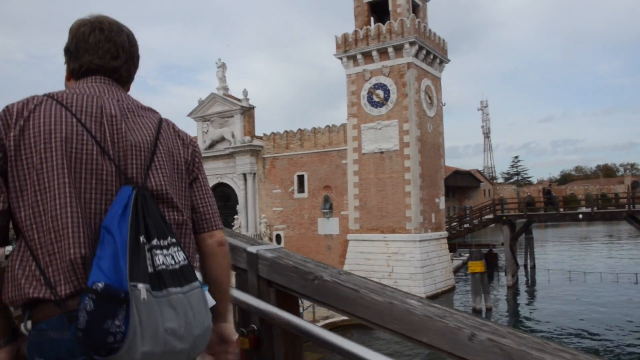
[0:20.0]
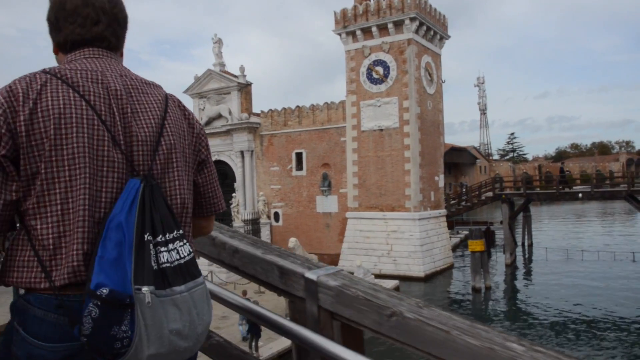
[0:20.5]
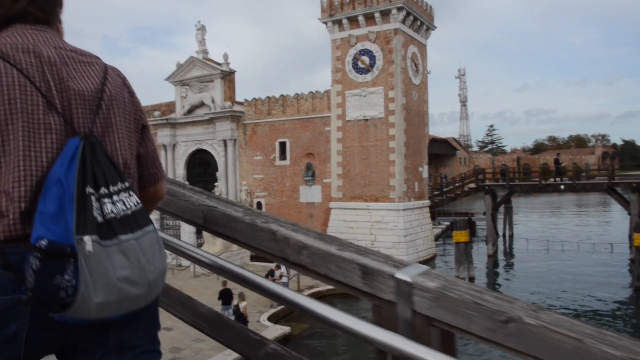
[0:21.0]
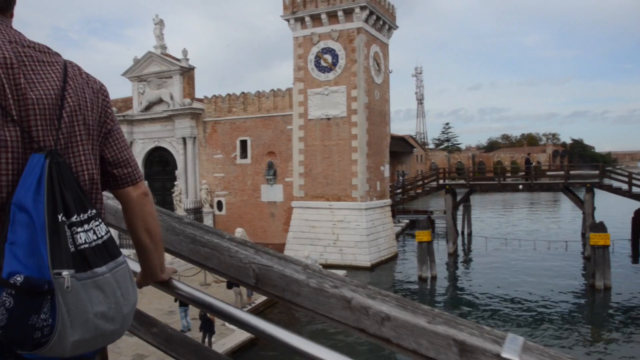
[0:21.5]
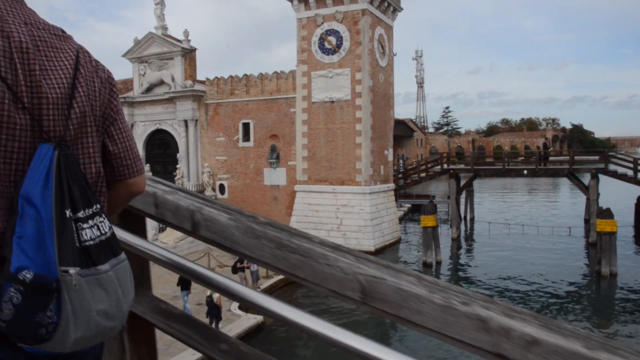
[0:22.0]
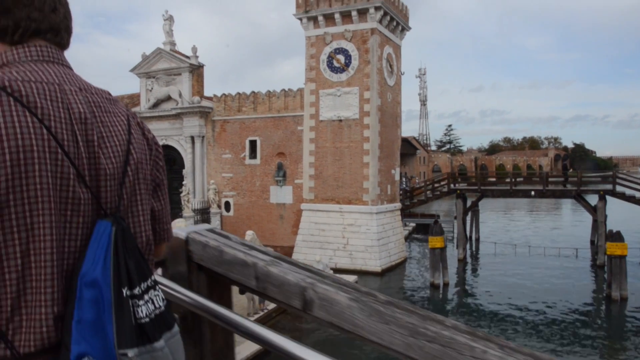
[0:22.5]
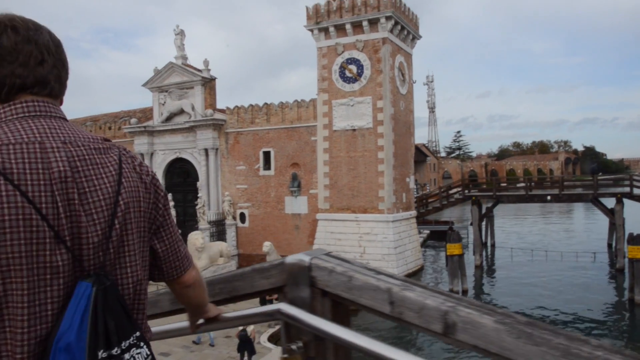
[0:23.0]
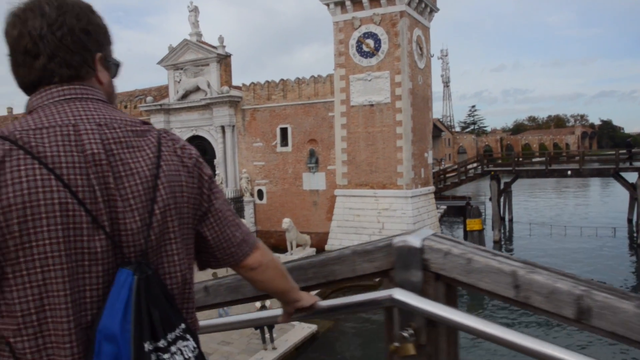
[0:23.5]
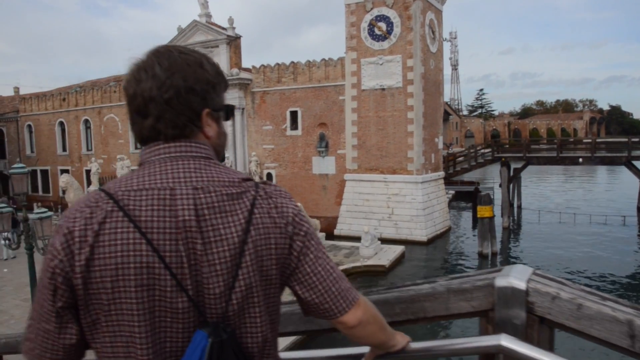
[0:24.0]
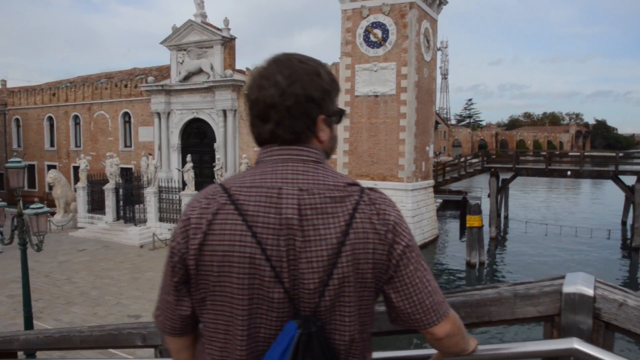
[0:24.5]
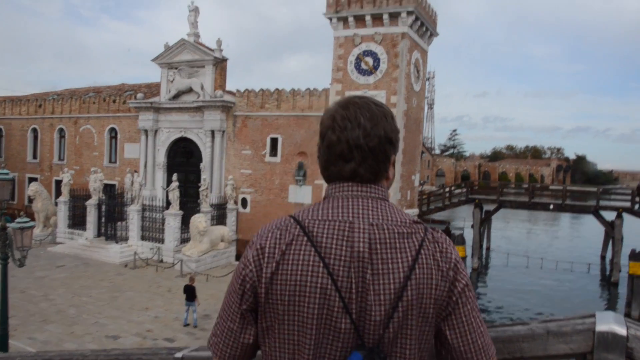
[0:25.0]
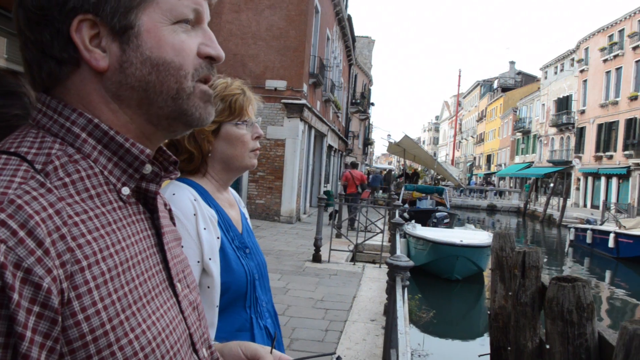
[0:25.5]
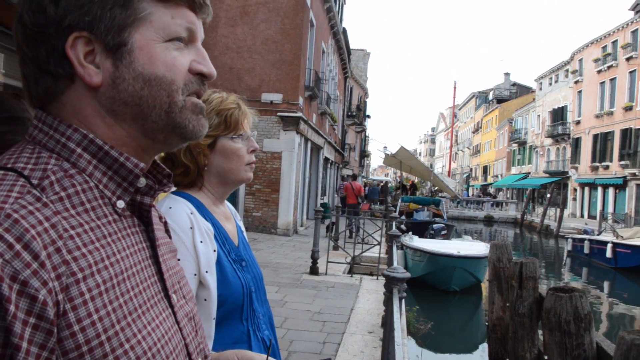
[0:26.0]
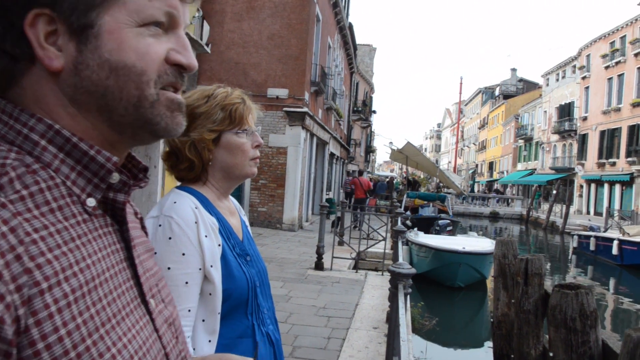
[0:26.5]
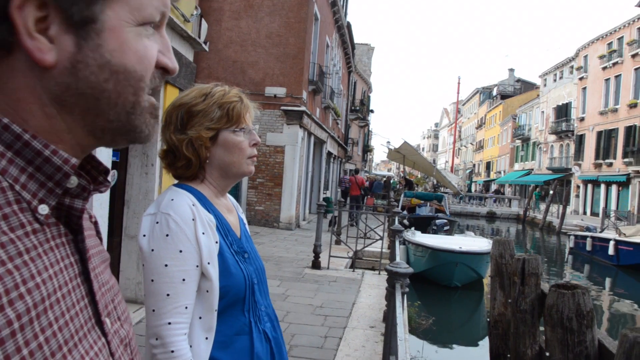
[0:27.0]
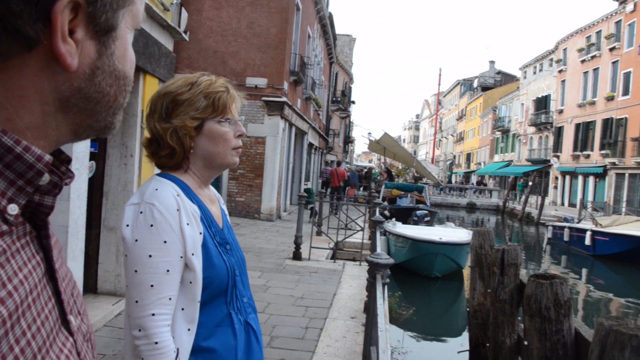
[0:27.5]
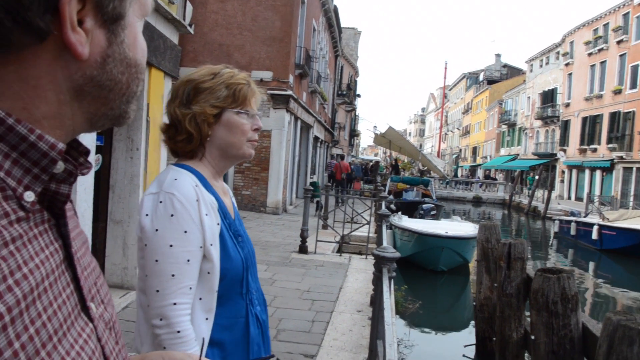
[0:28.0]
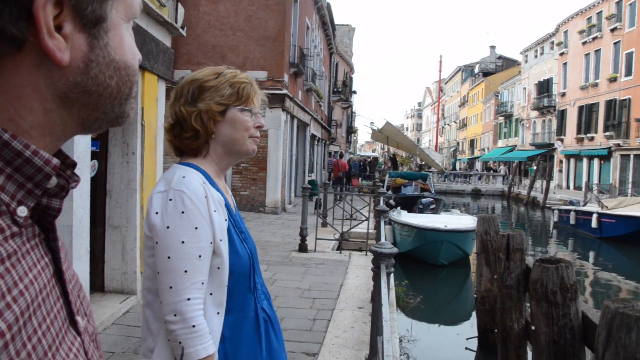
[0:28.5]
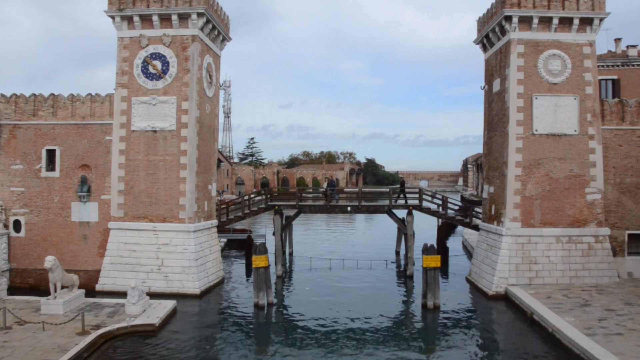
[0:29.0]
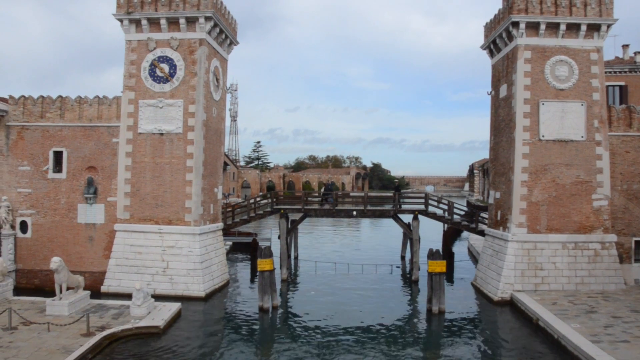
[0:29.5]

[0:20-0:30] A man in a plaid long-sleeve button-up shirt tours a city that appears to be Venice, with canals separating the different parts of the city. He wears gray pants and a small black and blue waterproof backpack with a white label that cannot be read. He crosses the bridge on the right side, holding the railing while admiring the view. He is with a woman who has red hair and glasses and wears a white flowered shirt with a denim-colored overlay. The man also wears glasses, which appear darker, like sunglasses. As they cross the bridge, the two look out into the distance and talk to each other. Multiple pedestrian bridges are visible, as is a tower with a clock.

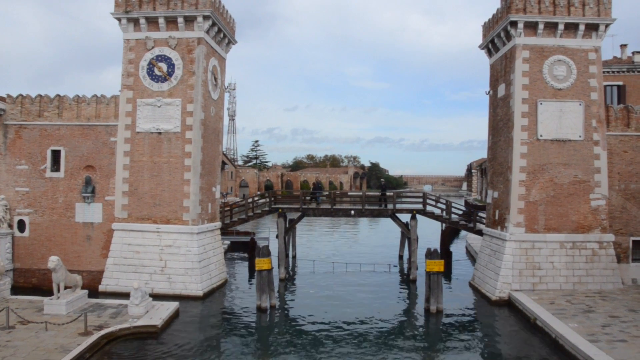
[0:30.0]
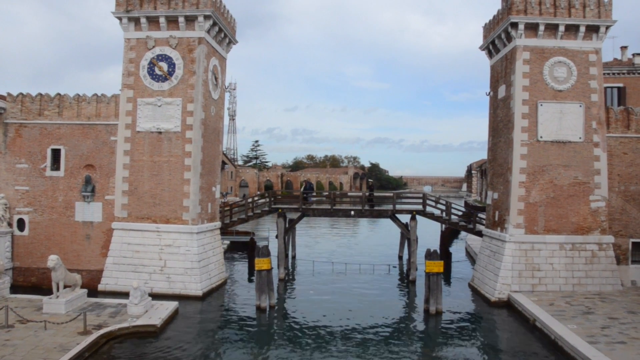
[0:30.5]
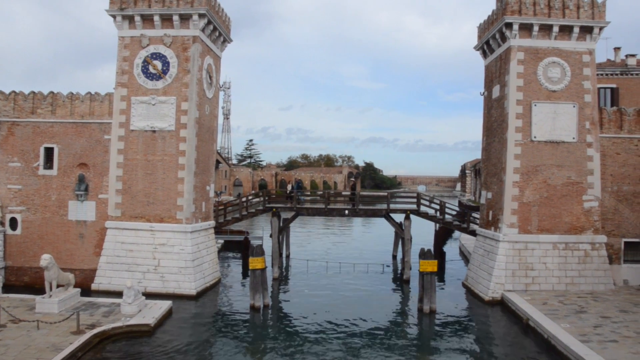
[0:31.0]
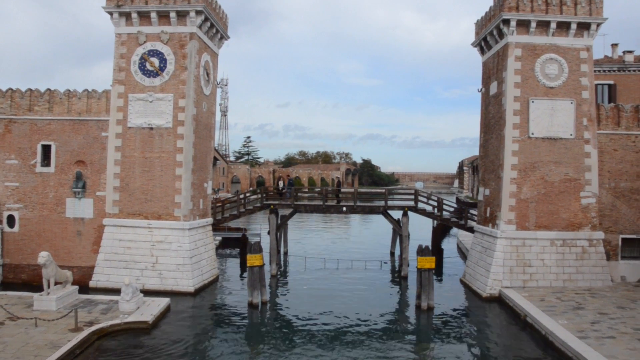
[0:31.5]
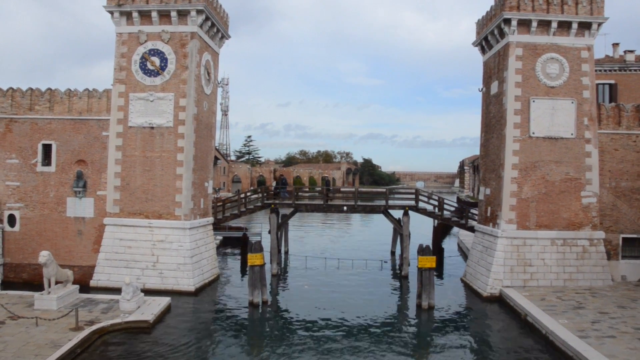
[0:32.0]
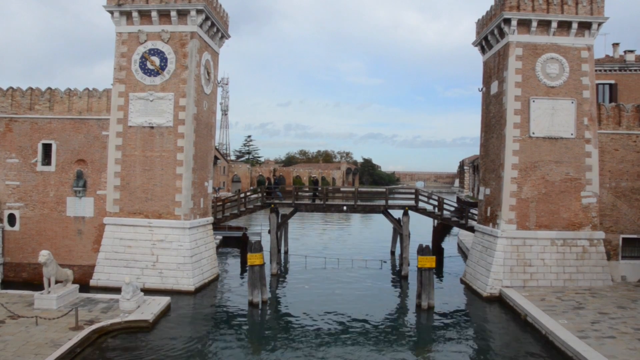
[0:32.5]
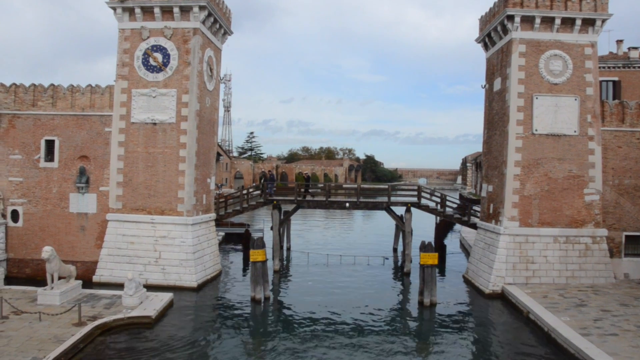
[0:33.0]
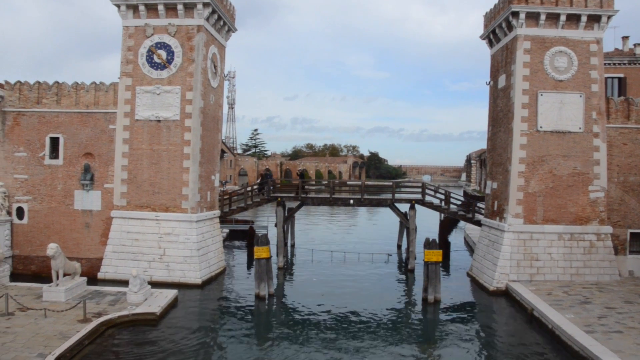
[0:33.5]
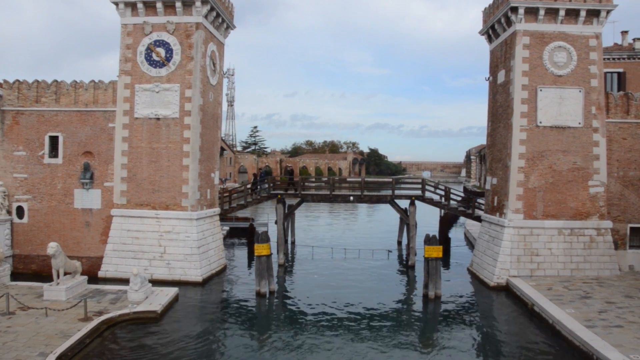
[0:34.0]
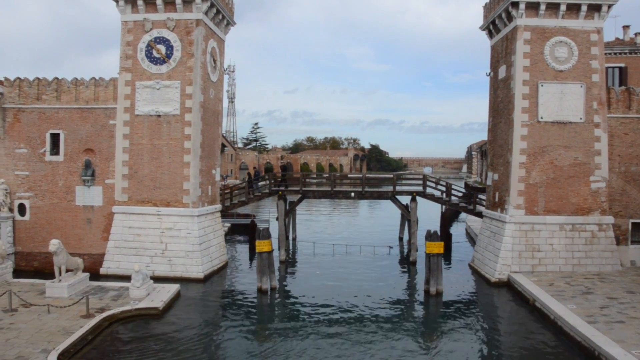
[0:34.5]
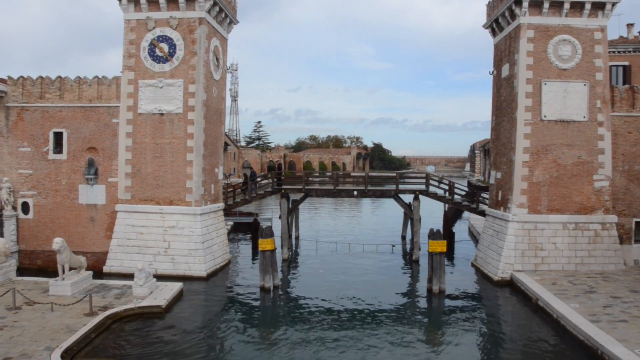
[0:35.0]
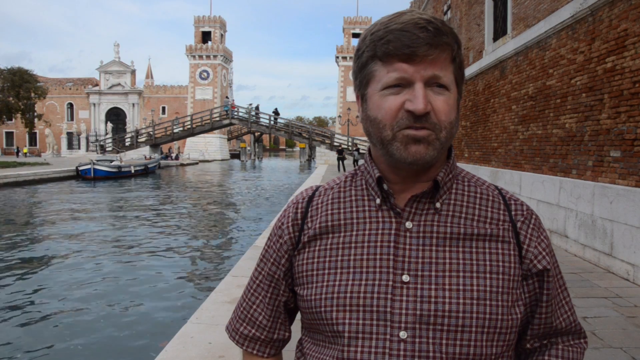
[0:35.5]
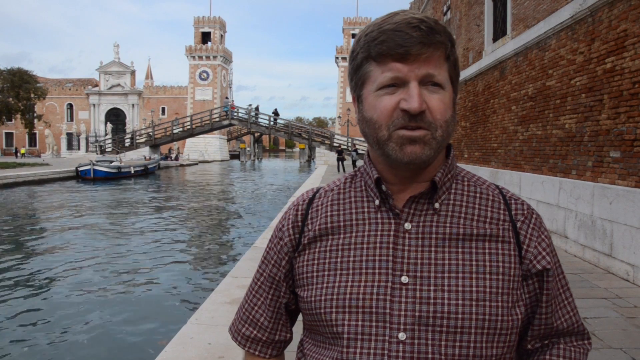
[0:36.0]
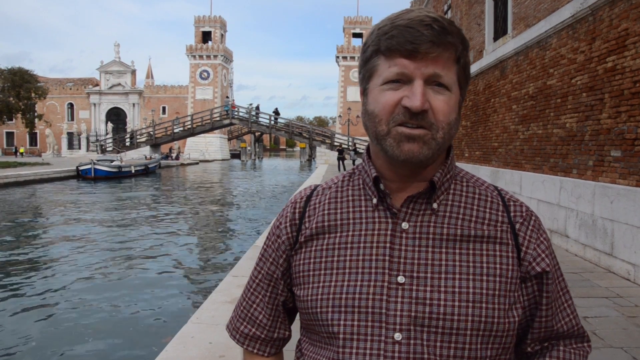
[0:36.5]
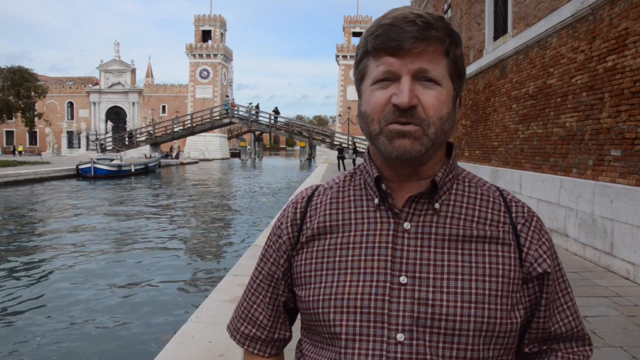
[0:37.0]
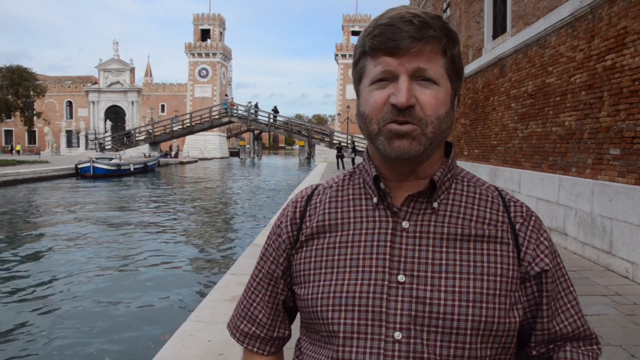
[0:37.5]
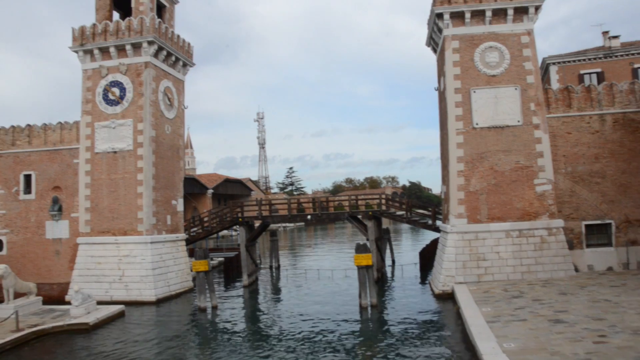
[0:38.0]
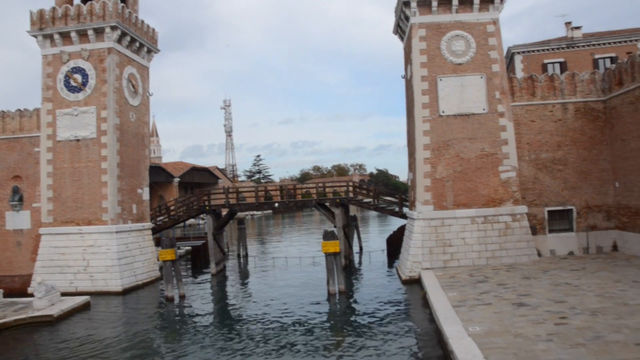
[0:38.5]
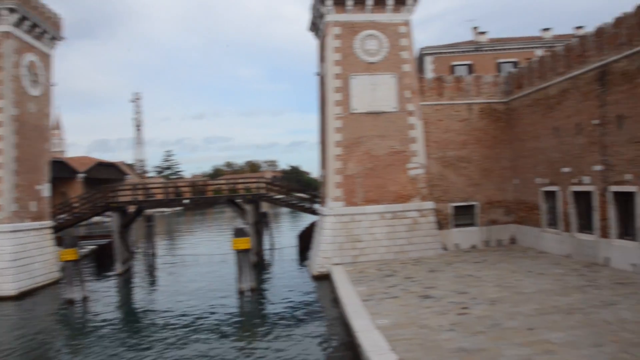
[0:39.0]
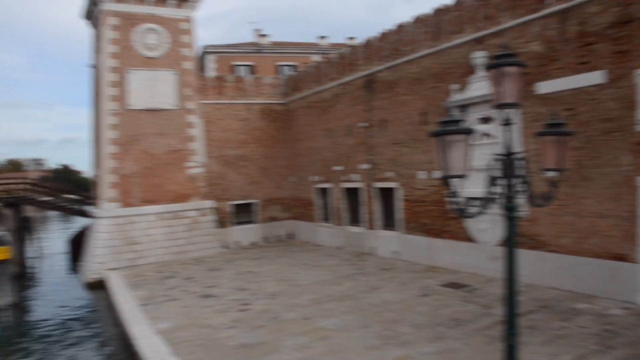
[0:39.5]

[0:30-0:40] The side of a pedestrian bridge is shown, leading to an area of the city with something that looks like a tower; there may be a clock on the tower, but it is hard to tell. A man in a red and blue plaid long-sleeve button-up shirt talks to the camera. It is unclear who is recording. Canals separate the different sections of the city, and the man and his companion talk as they look at this area of the city, though what they are saying is unclear.